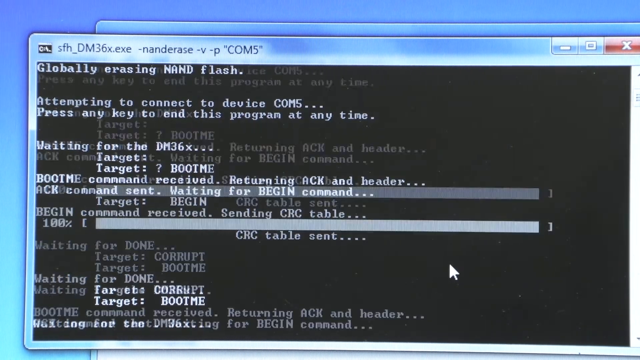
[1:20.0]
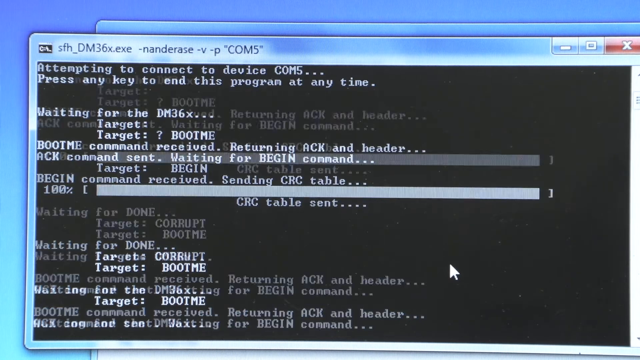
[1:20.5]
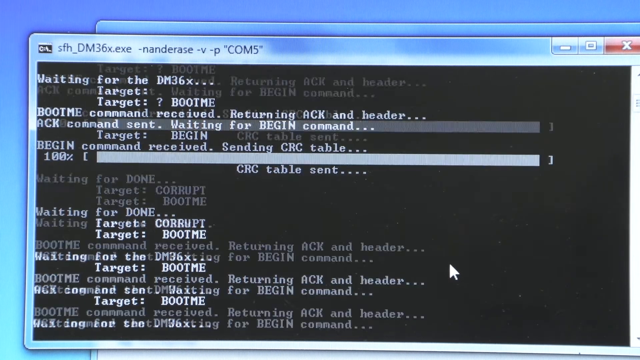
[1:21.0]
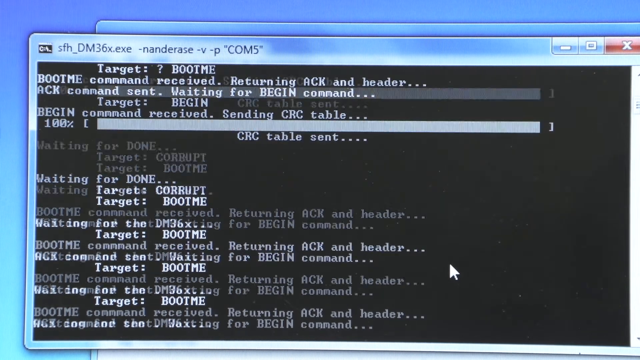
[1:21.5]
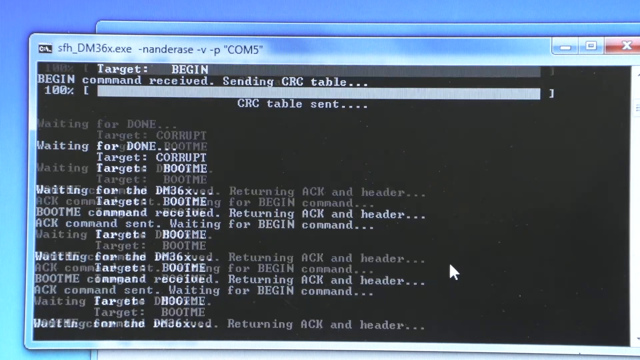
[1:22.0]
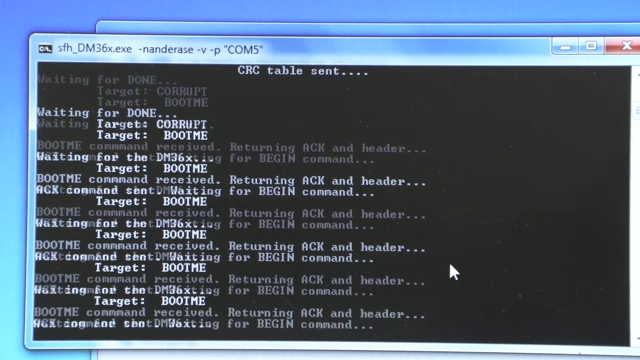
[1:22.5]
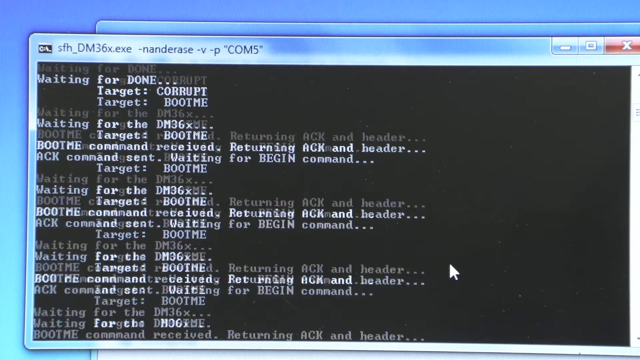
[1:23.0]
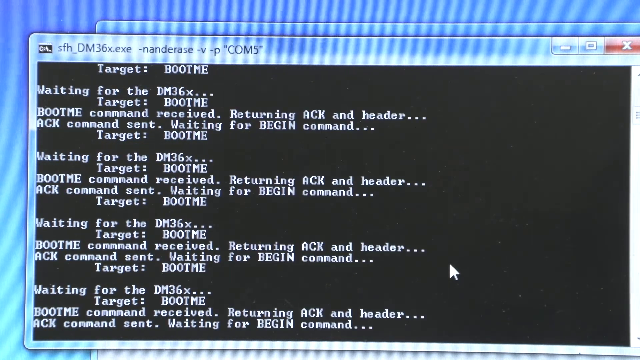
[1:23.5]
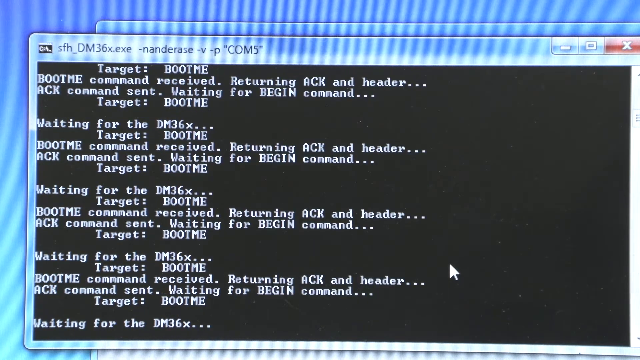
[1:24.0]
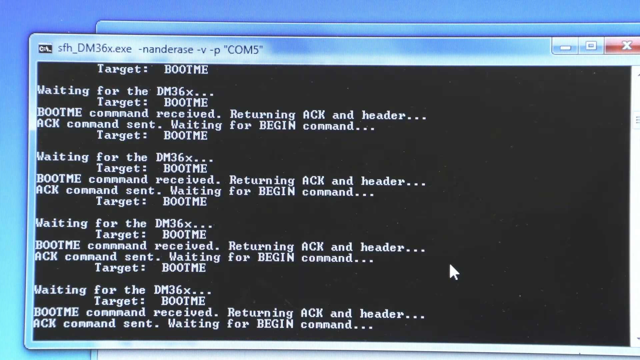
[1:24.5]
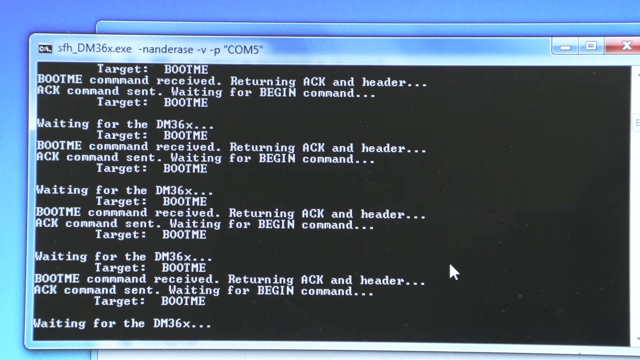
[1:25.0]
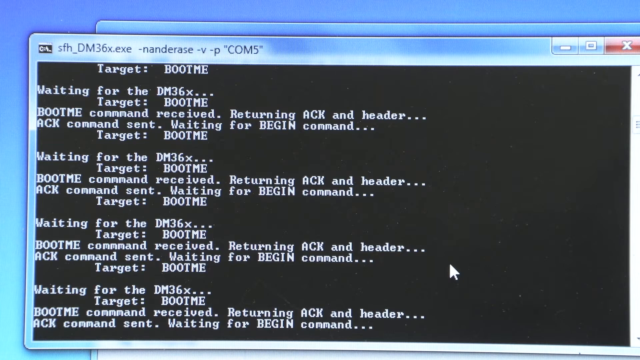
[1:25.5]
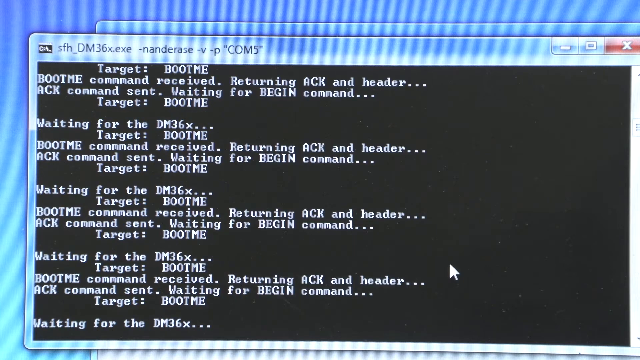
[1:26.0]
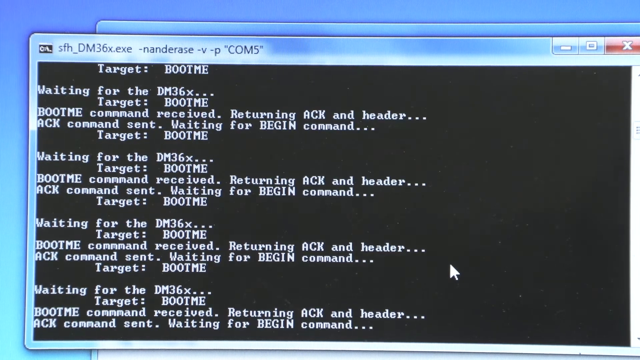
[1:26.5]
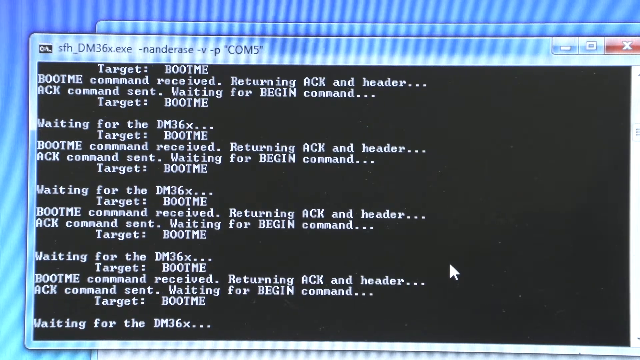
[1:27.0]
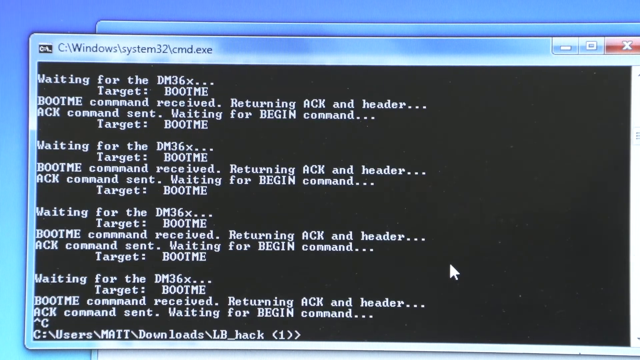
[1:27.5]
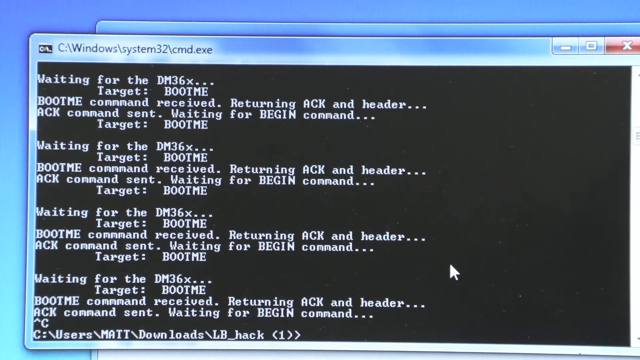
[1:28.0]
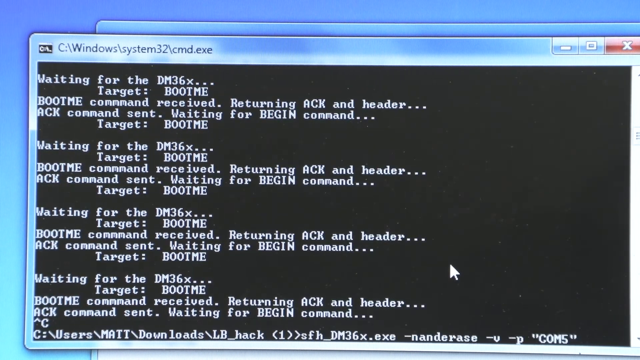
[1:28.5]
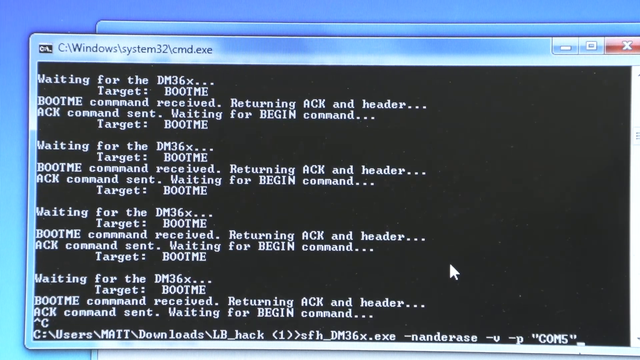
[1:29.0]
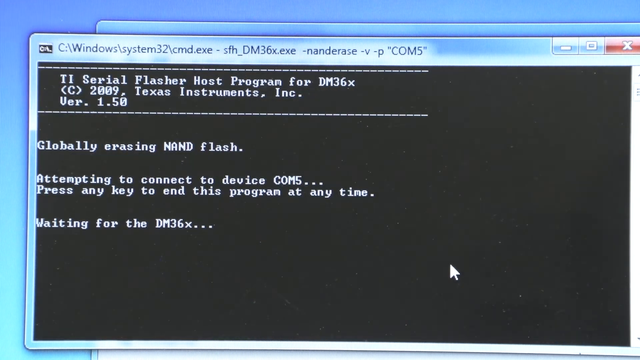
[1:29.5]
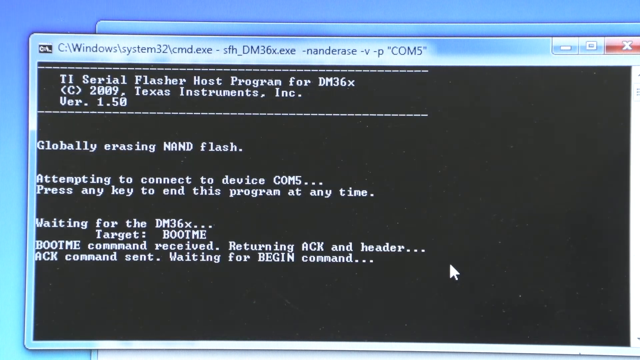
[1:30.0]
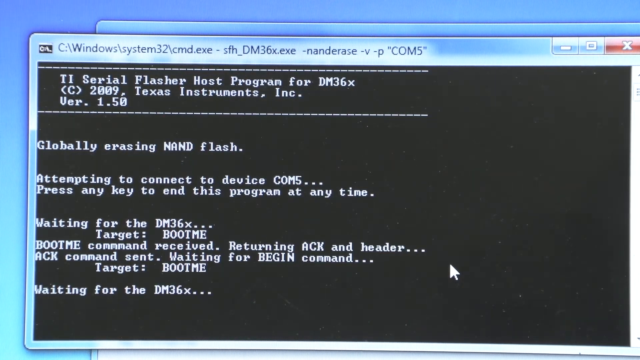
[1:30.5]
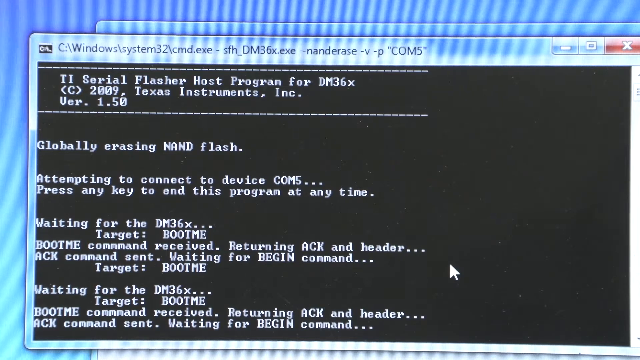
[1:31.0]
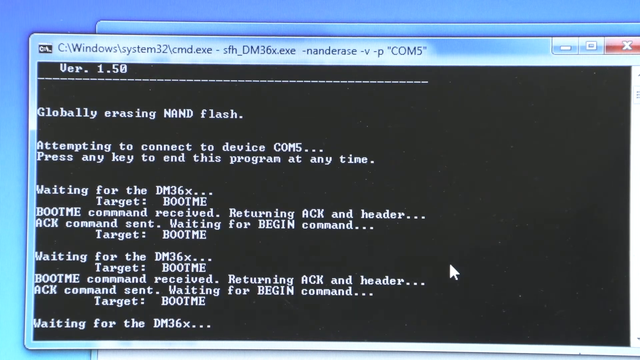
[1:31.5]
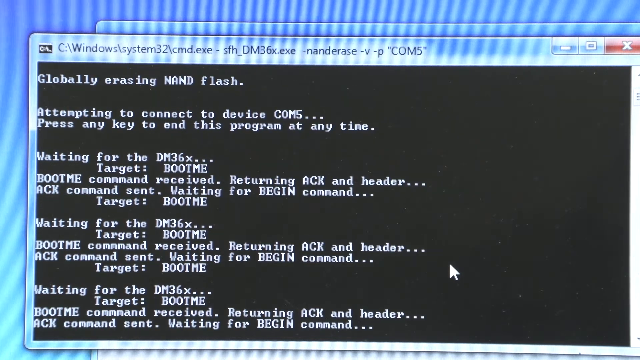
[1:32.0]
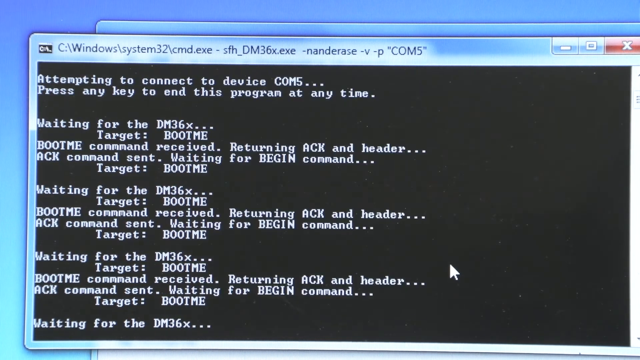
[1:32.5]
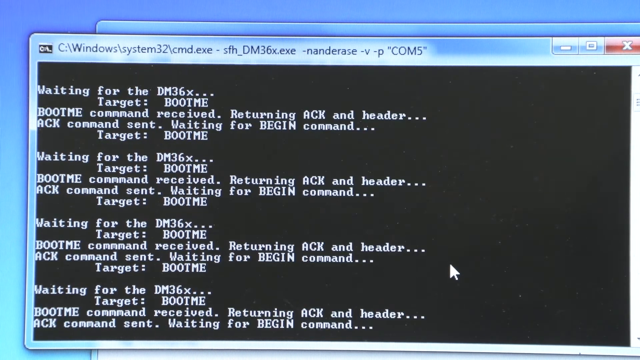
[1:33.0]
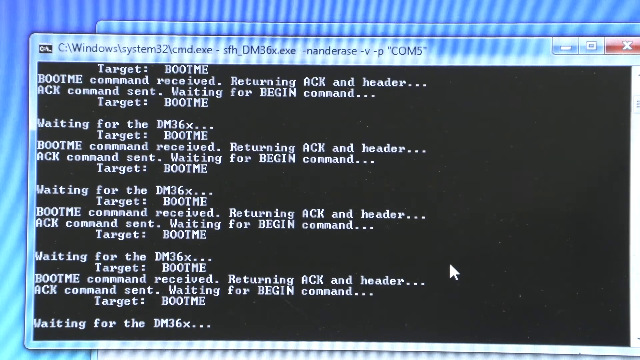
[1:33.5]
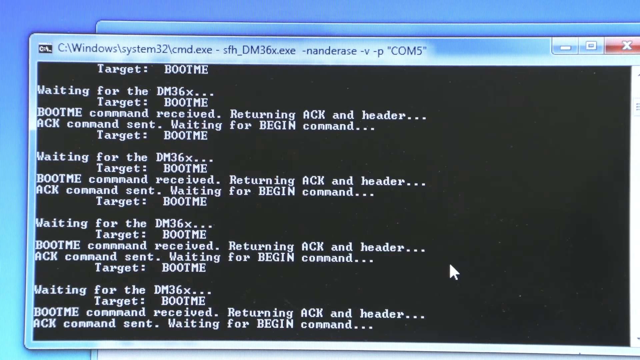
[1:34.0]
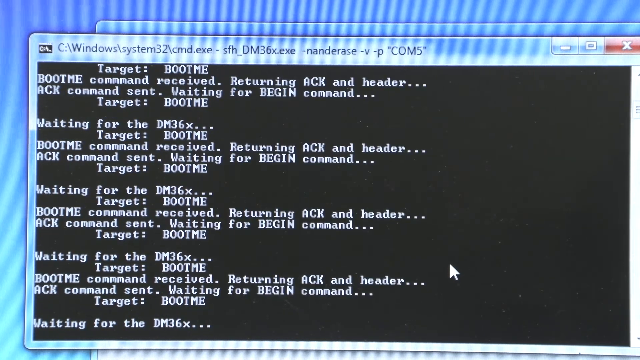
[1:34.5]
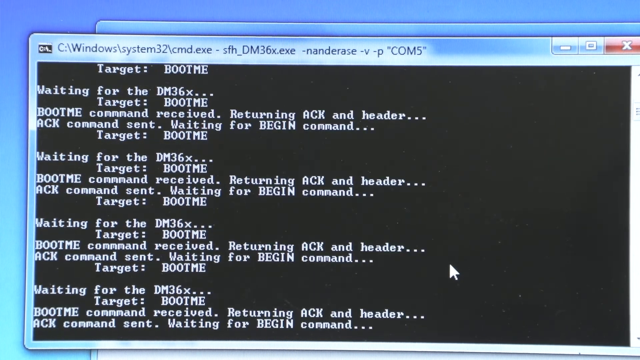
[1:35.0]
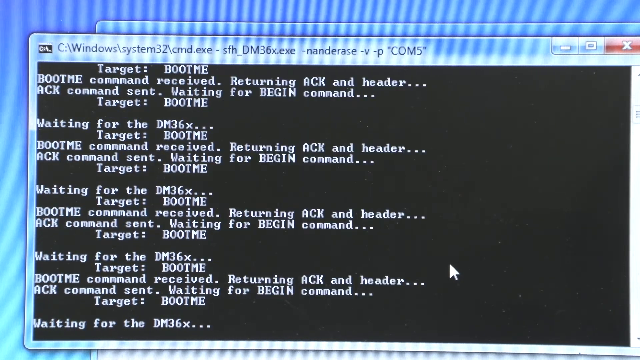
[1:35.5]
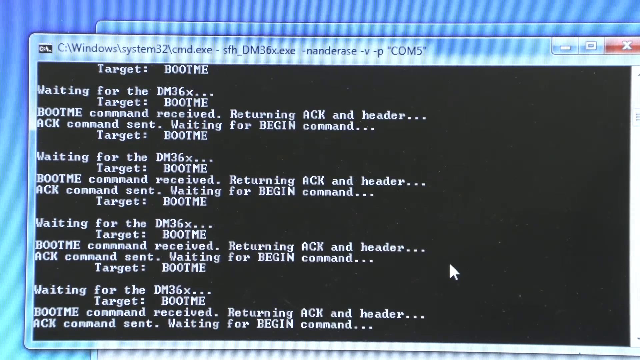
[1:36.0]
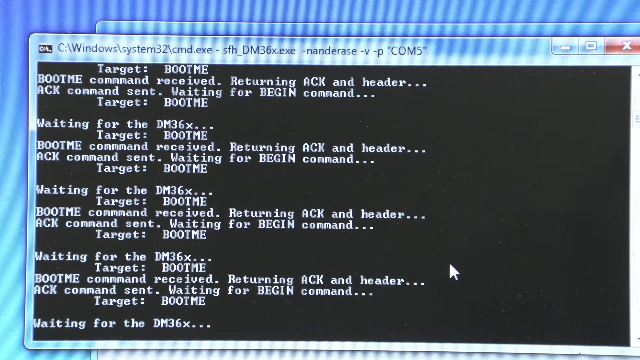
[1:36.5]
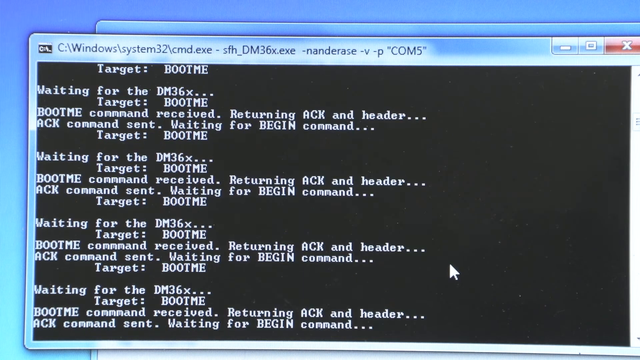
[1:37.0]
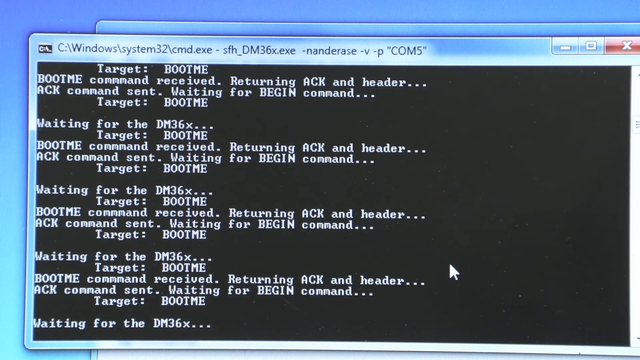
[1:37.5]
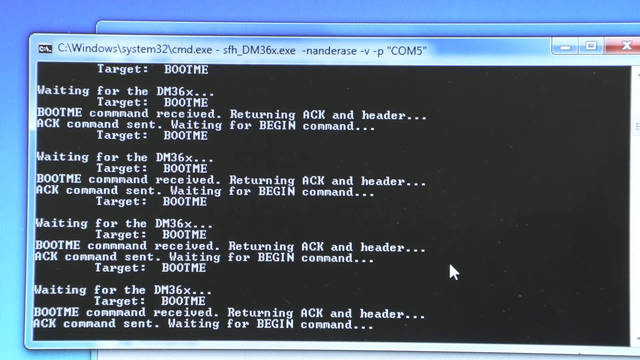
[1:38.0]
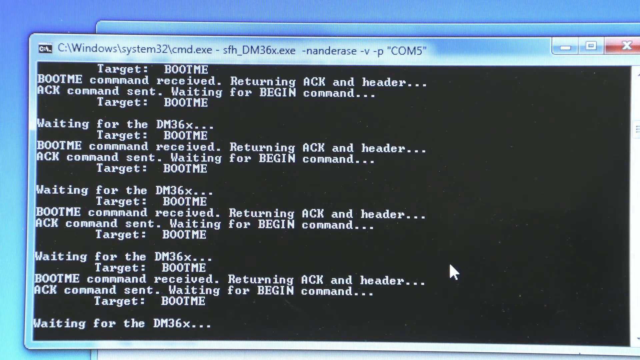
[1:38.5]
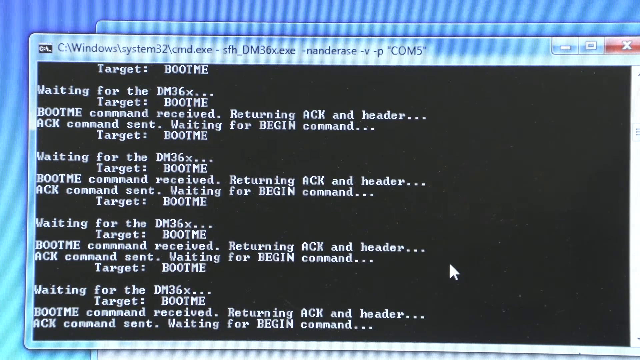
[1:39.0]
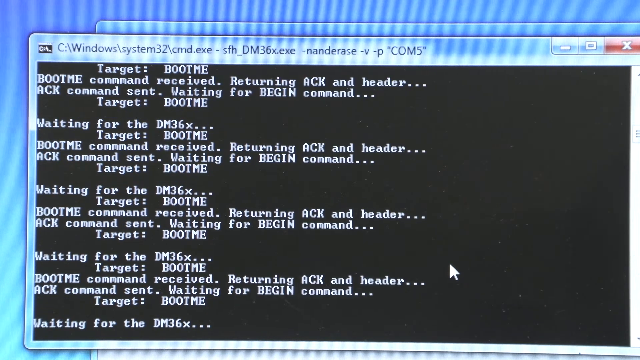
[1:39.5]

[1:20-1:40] Lines of code are shown in white text over the blue background. Another dialog box is behind the code box, which is in front with a blue border. On the code page, a loading bar quickly loads to 100 percent and the text says "CRC table sent". Multiple lines of code then load quickly, repeating the text "waiting for the DMX36X..target bootme. Bootme command received. Returning ACK and header..ACK command sent. Waiting for begin command..target bootme." This message is repeated many times as the box scrolls down, loading fairly quickly.